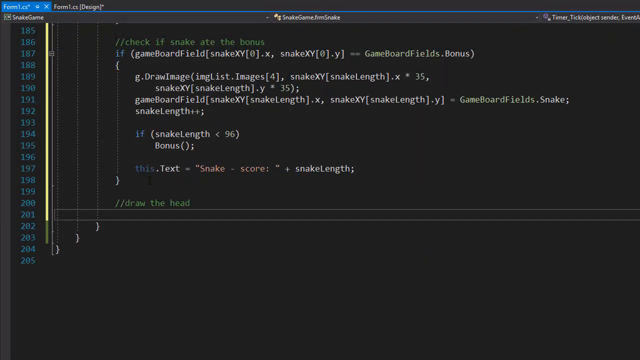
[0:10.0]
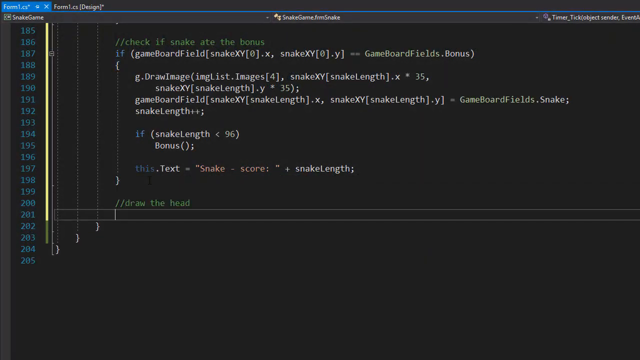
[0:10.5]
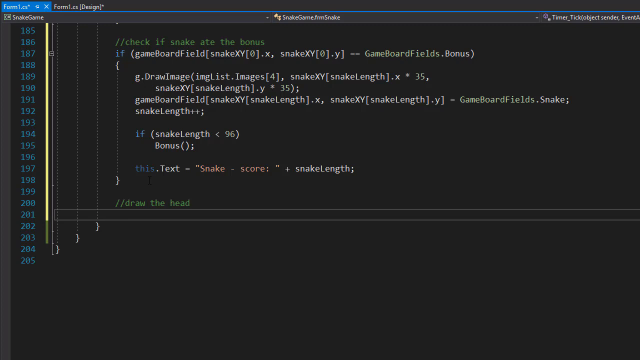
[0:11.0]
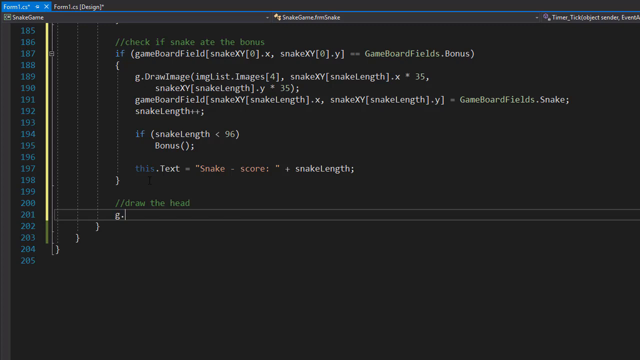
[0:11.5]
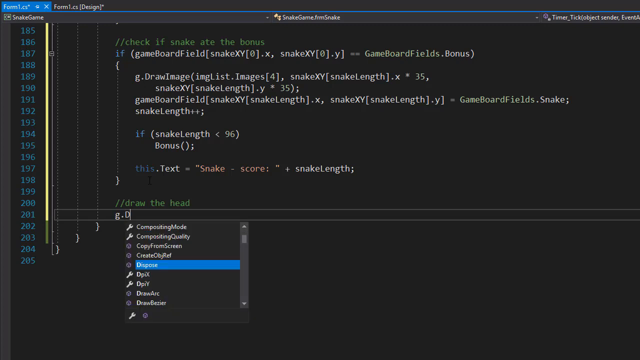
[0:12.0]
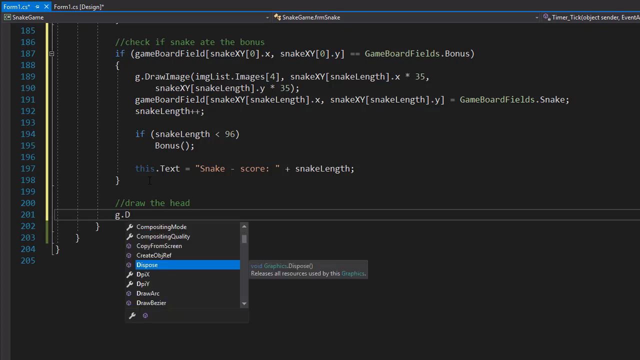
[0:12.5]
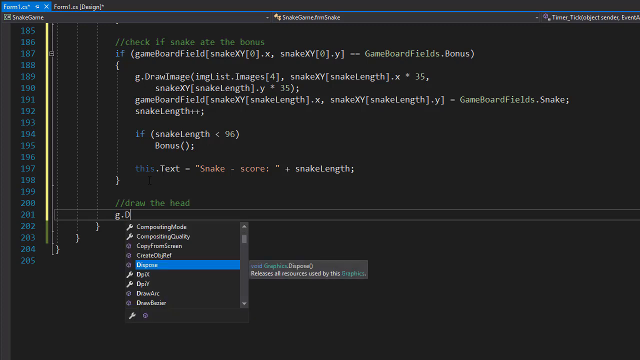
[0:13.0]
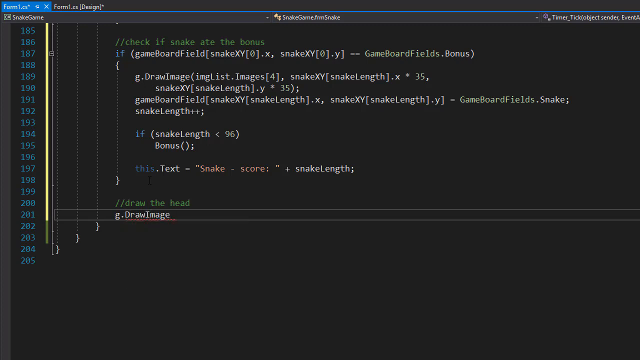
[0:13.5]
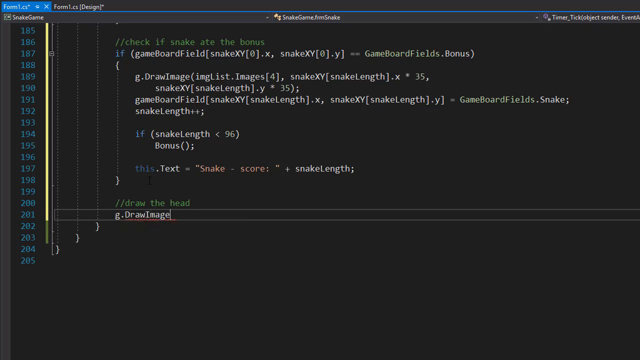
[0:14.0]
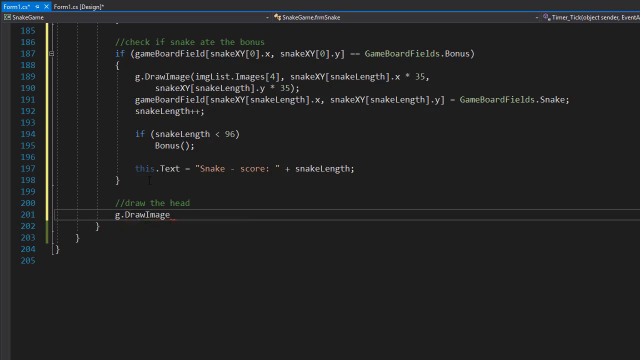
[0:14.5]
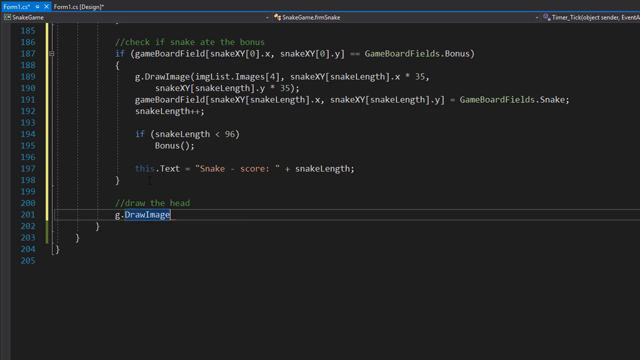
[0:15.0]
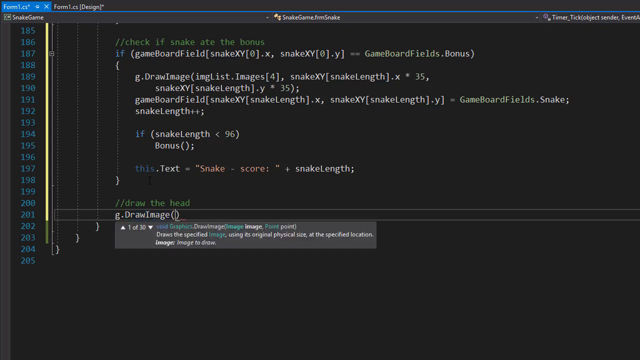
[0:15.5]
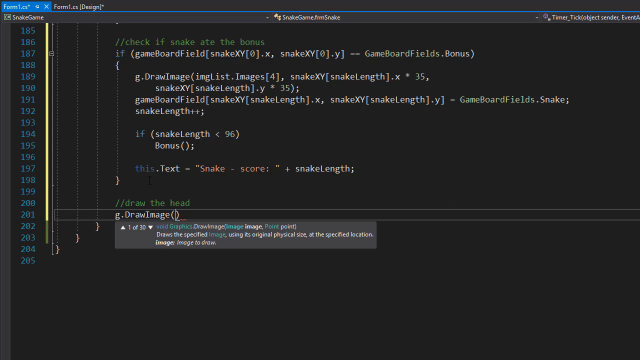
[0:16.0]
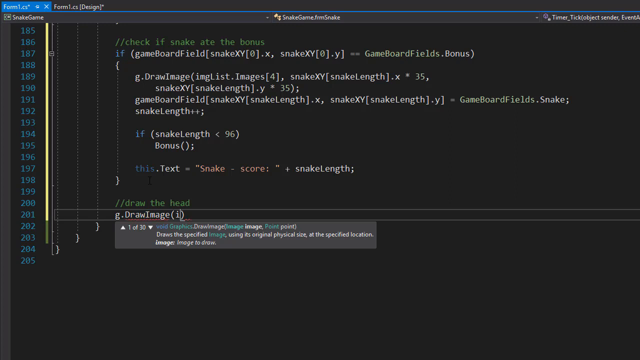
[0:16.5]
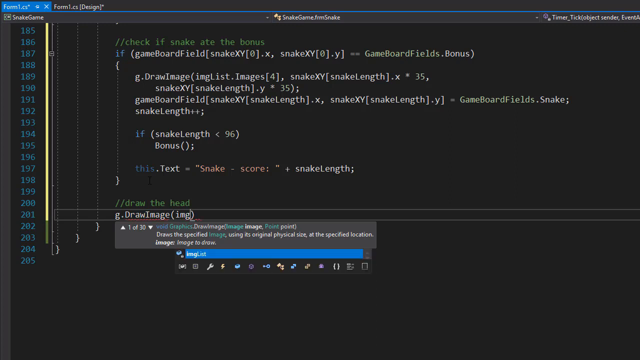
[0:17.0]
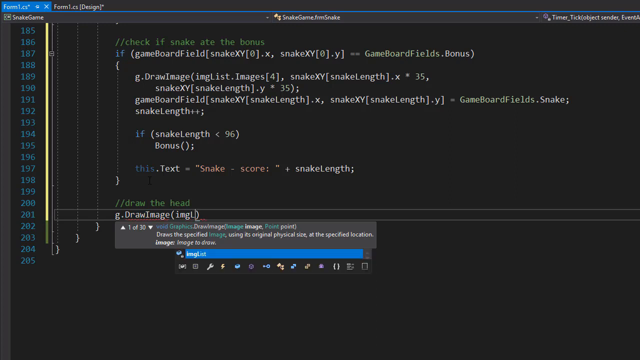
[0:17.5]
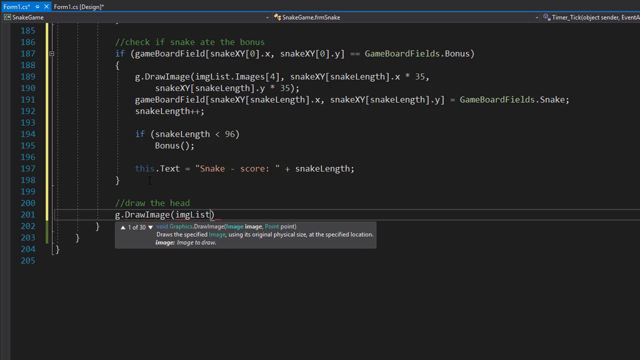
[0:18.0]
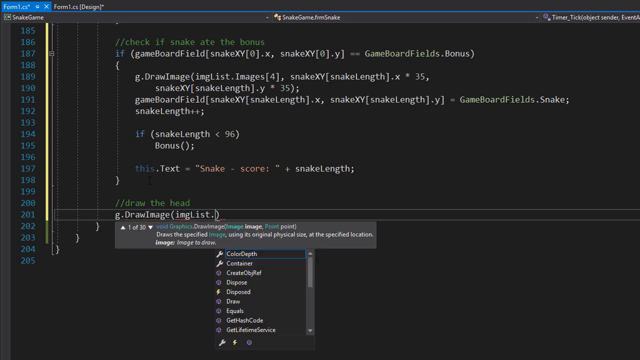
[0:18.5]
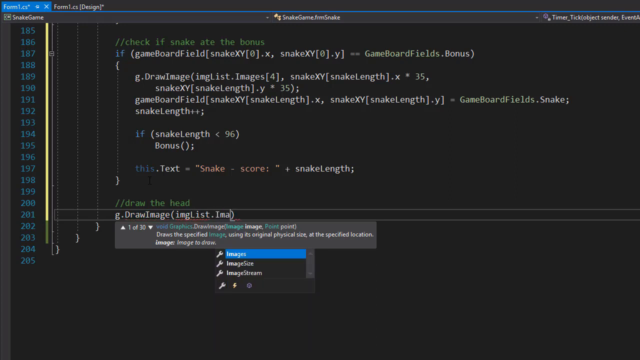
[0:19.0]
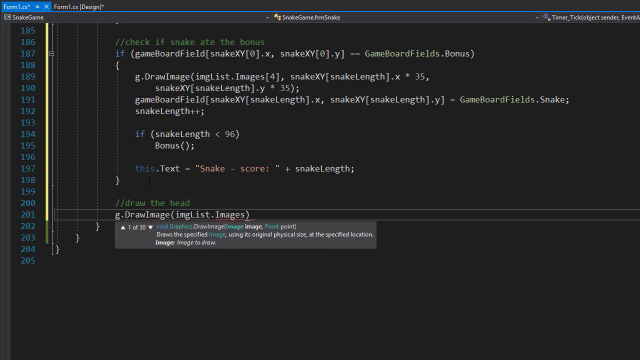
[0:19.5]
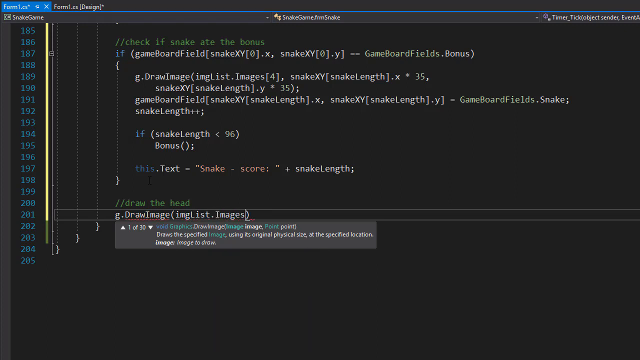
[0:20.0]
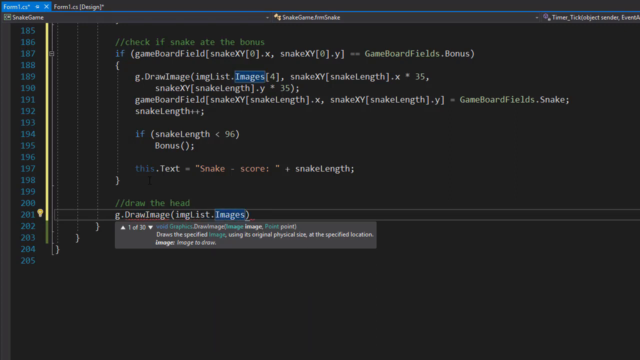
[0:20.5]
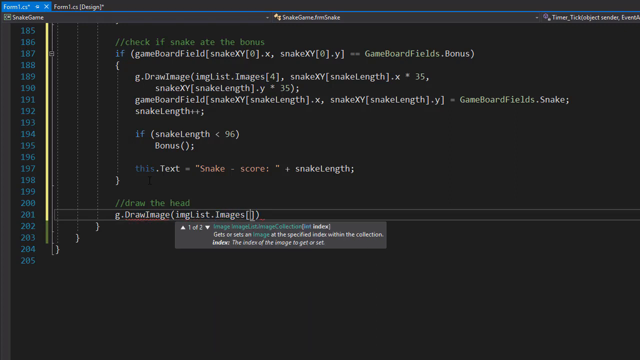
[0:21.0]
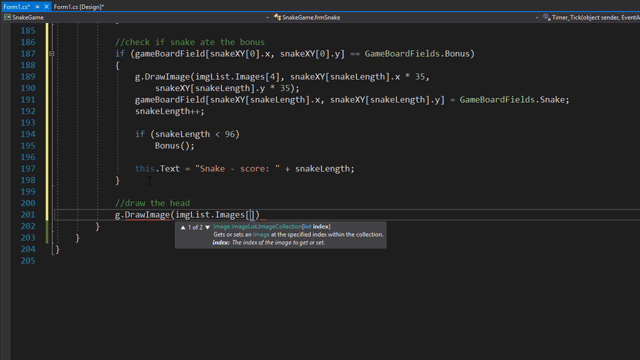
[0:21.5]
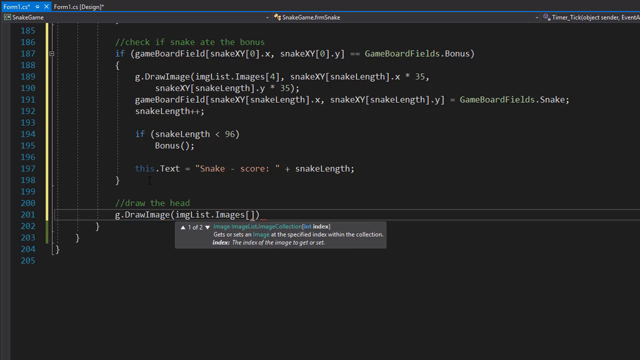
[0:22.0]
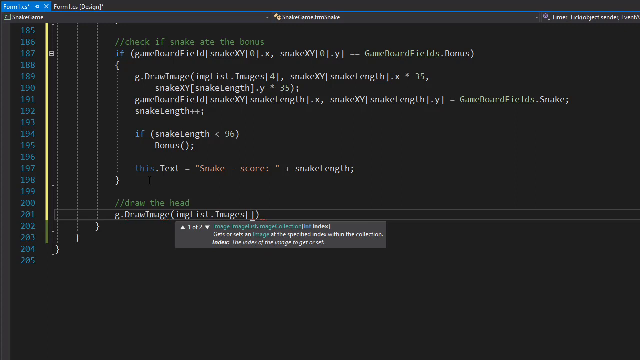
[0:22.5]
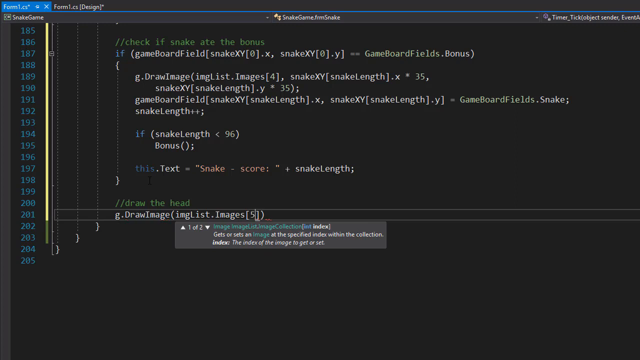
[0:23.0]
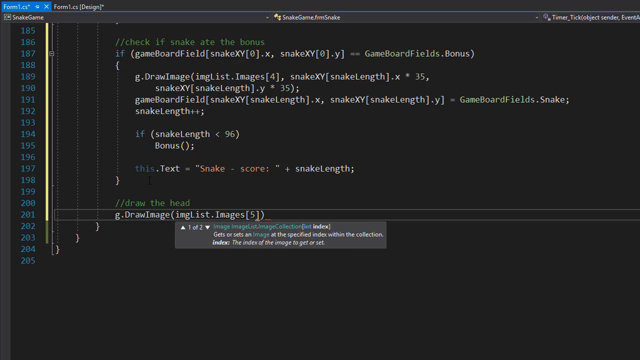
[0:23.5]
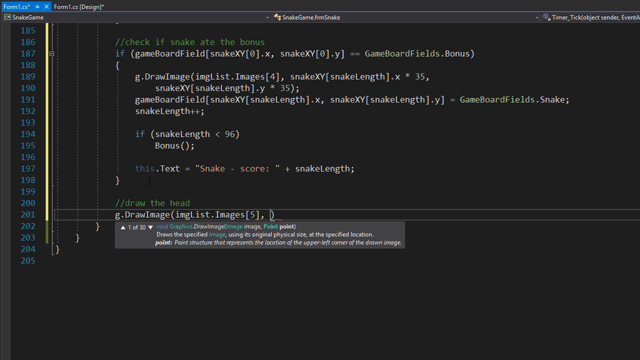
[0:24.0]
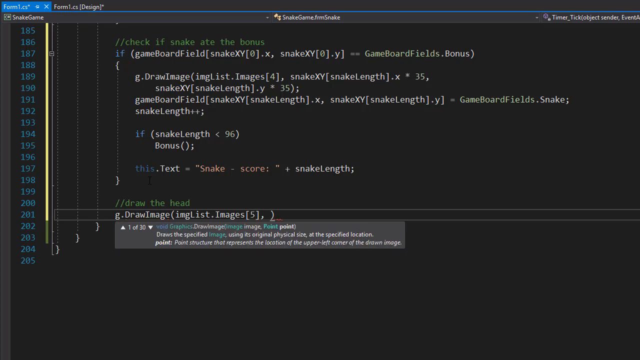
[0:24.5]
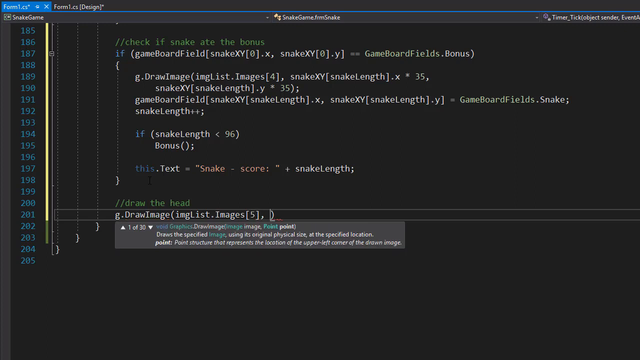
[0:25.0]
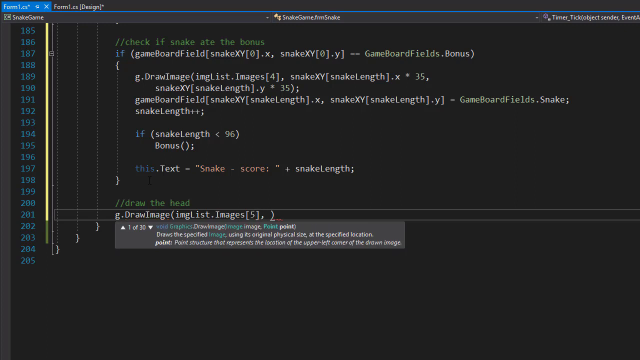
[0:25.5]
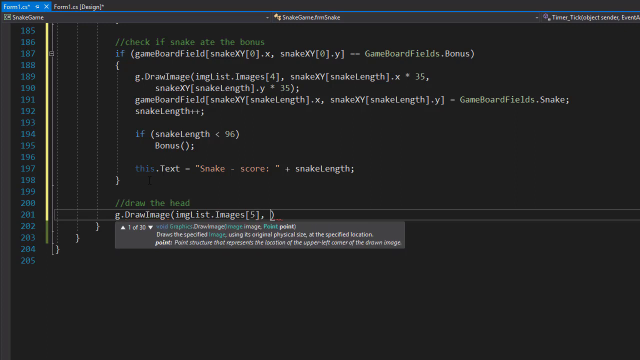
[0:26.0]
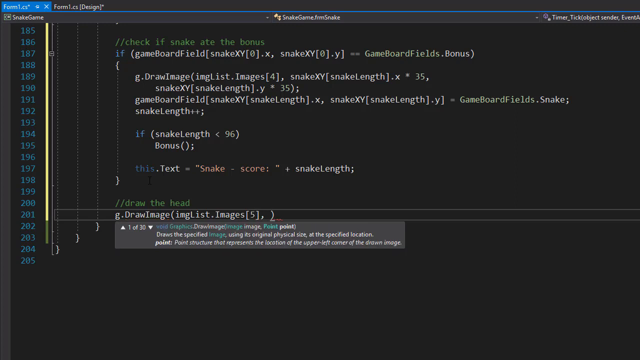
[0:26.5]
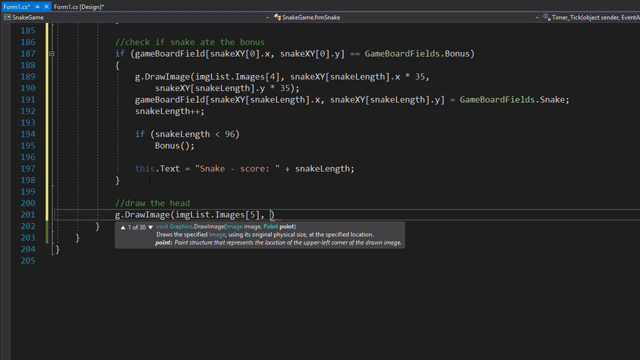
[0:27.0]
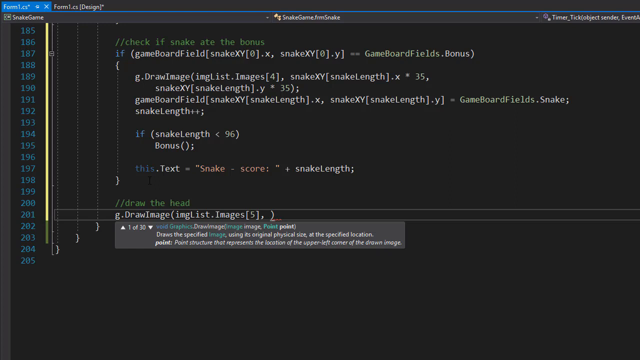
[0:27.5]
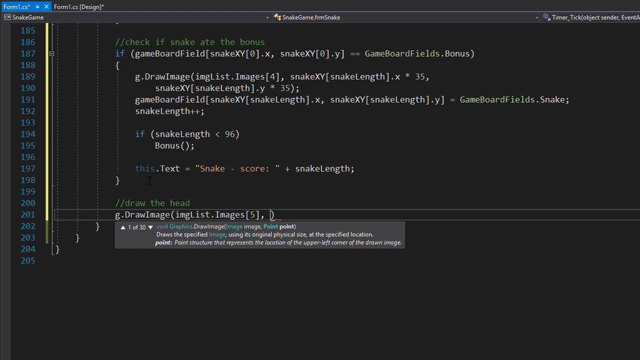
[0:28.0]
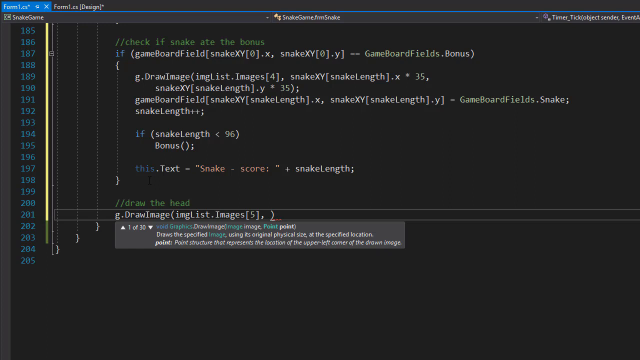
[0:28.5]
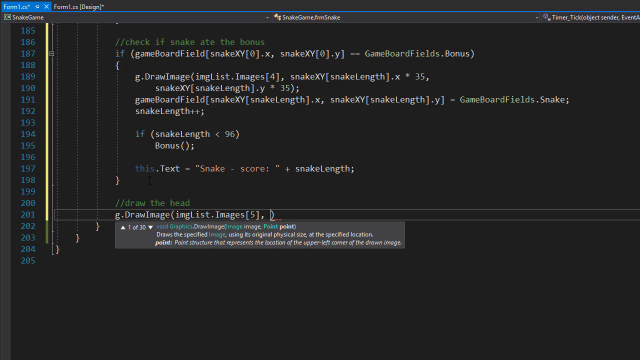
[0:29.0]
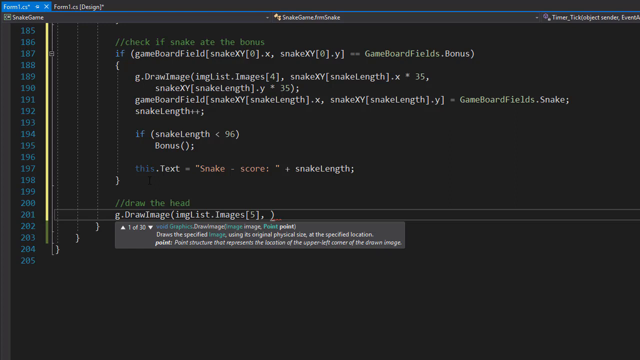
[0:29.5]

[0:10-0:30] The compiling screen continues, showing what appears to be C# code for the game Snake. At the top of the screen is blue text with the file name, outlined in blue, and there look to be two tabs. The small file name reads "Snake Game from Snake." Line numbers run down the left-hand side. At line 186 is the comment "if snake ate the bonus," followed by an if statement containing commands to draw an image, and another if statement setting a condition on the snake's length to receive the bonus. At line 200 is the comment "draw the head," and at line 201 the user begins entering a command to draw an image.